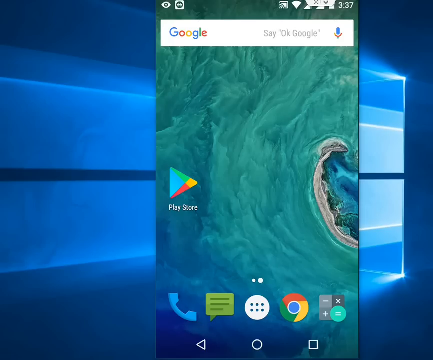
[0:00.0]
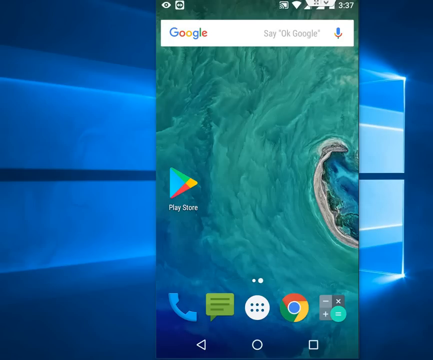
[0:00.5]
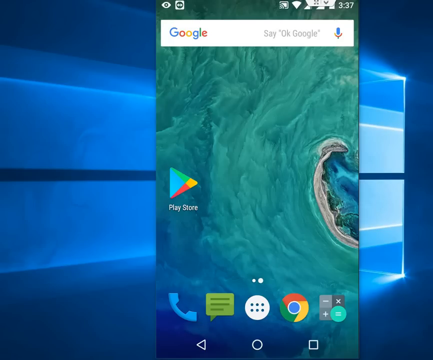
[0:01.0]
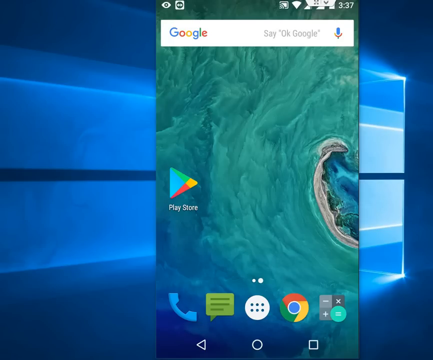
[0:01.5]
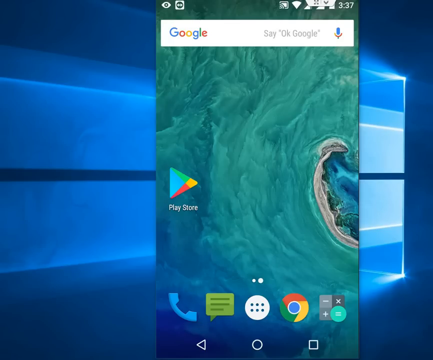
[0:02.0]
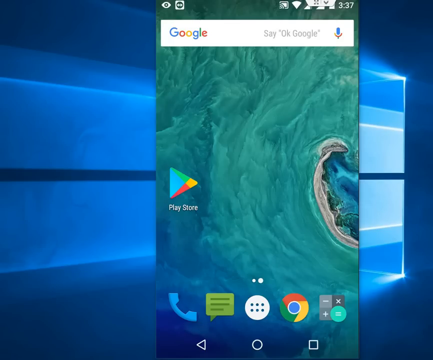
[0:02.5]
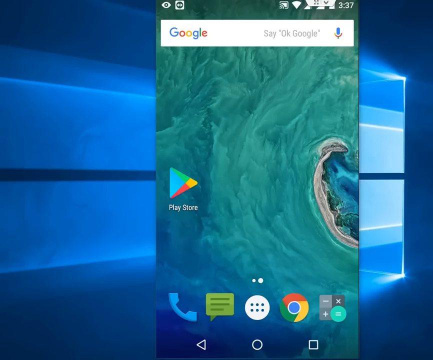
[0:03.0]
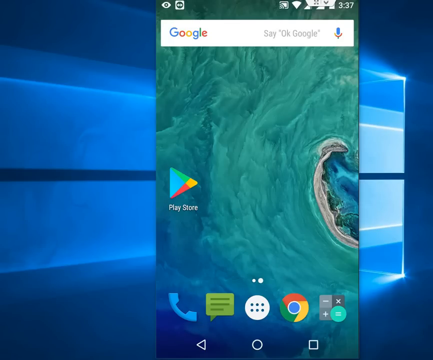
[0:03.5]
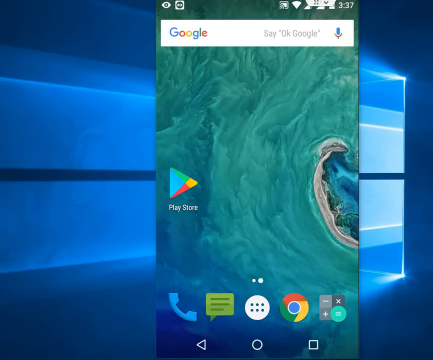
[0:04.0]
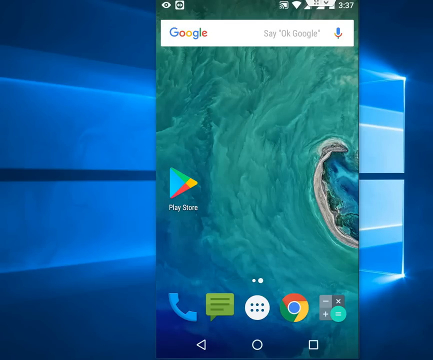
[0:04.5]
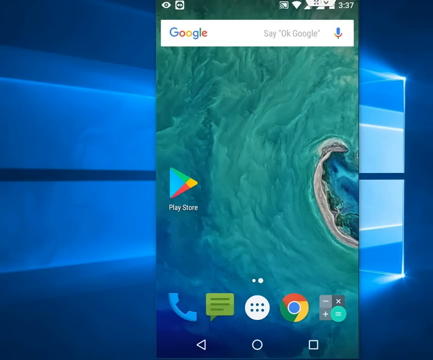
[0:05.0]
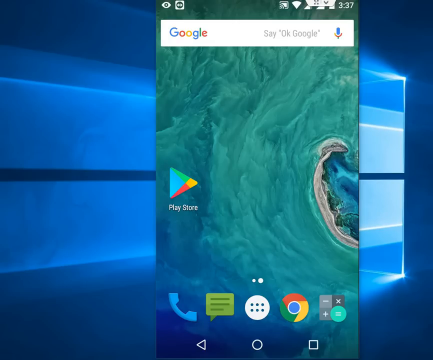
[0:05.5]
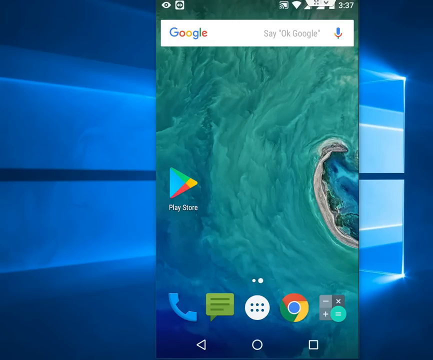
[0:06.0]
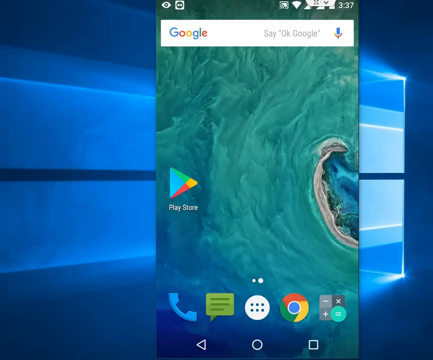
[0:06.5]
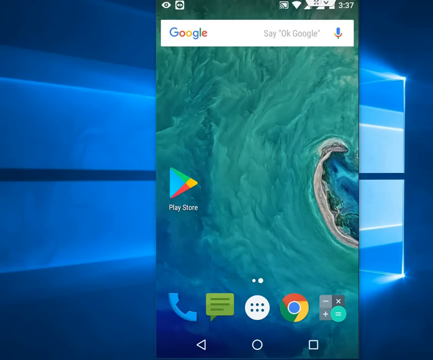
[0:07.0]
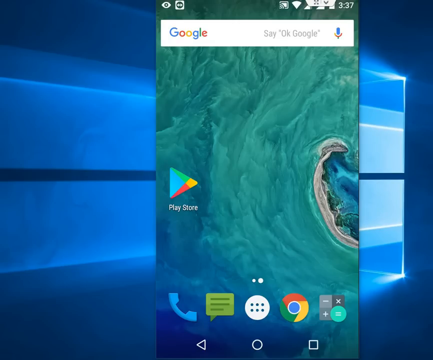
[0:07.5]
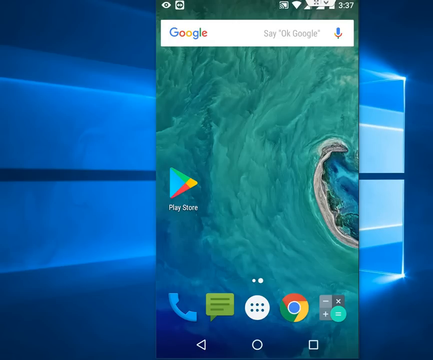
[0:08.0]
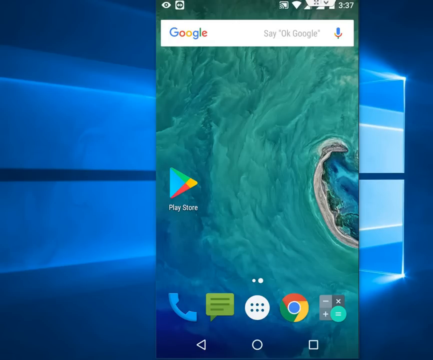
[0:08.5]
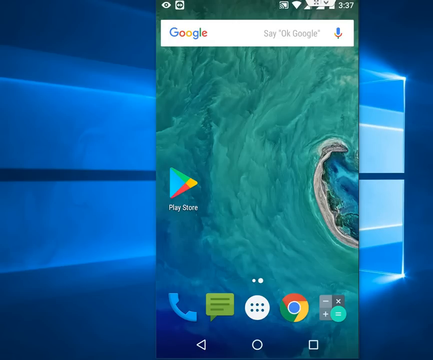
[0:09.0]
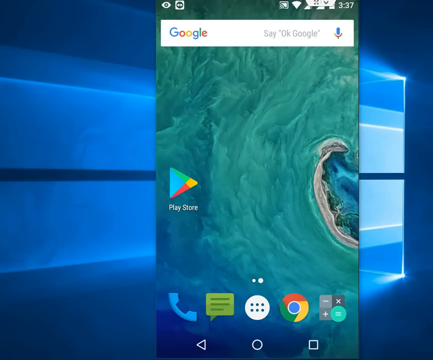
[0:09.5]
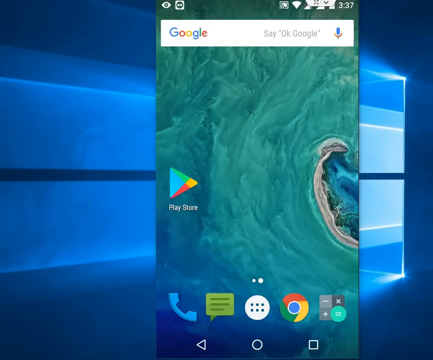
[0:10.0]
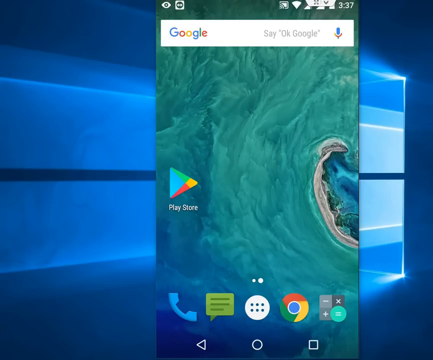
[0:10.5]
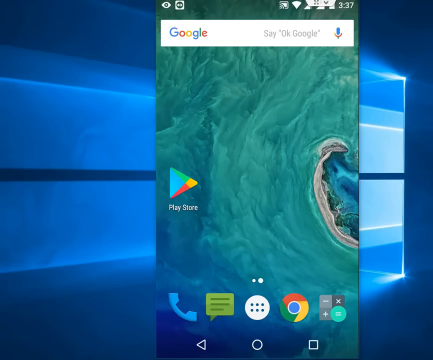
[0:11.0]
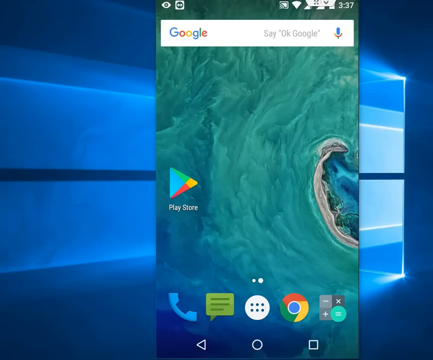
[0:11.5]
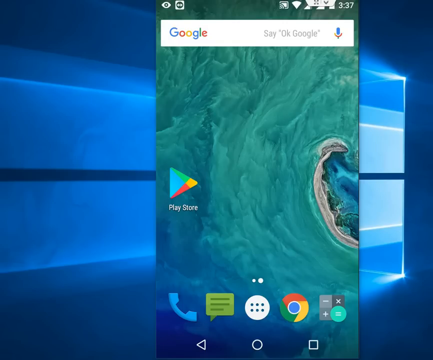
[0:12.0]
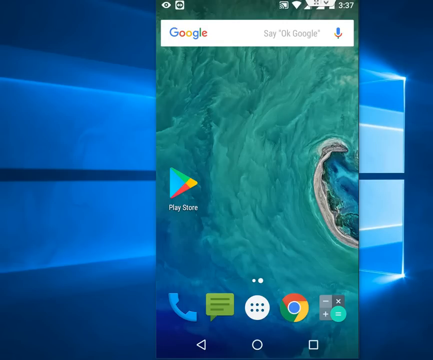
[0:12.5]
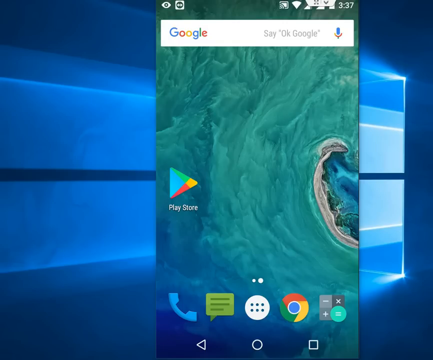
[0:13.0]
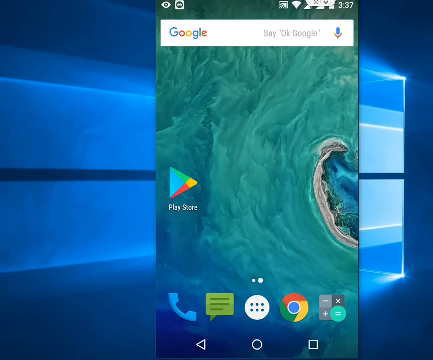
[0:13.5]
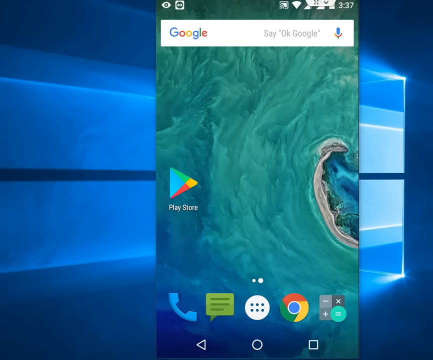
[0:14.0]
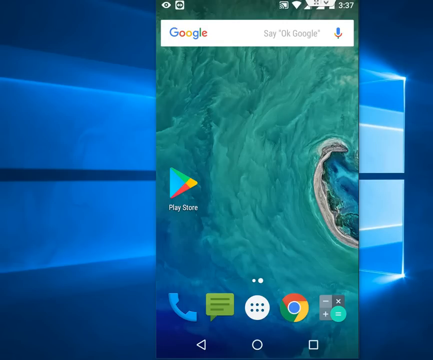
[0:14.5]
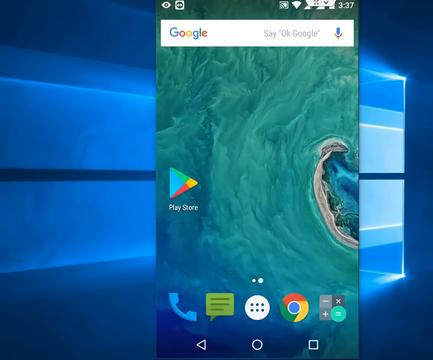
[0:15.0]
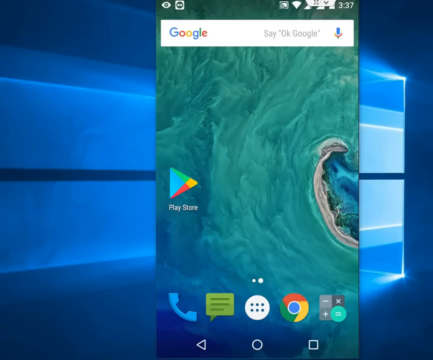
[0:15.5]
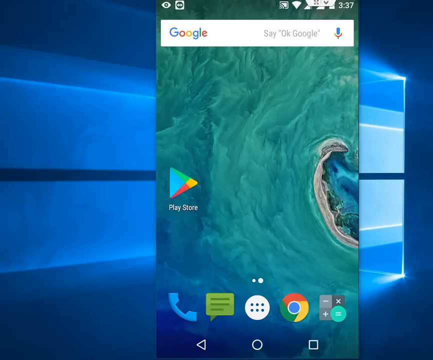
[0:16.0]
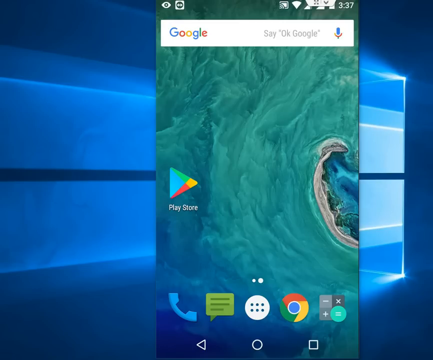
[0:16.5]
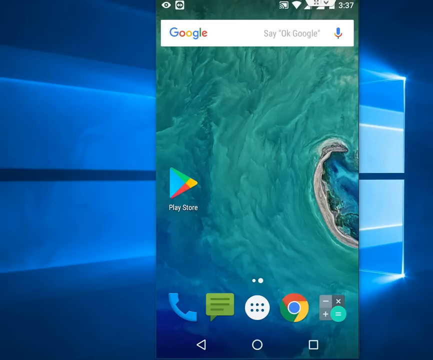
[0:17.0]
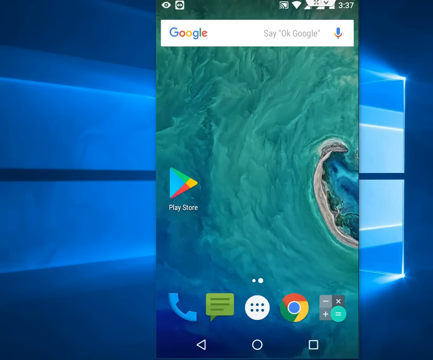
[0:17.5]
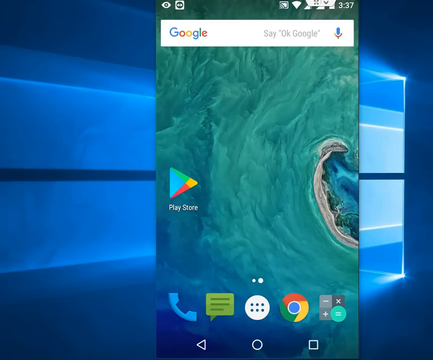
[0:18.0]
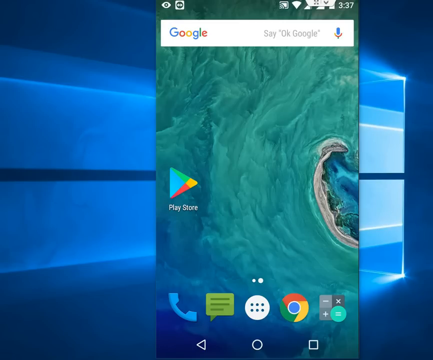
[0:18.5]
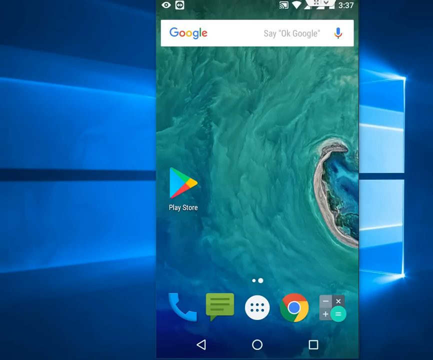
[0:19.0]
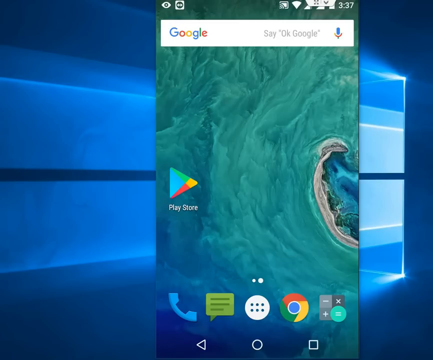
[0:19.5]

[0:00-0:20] A screen with a blue background is shown, which appears to be the Windows background, though it is hard to tell. The right-hand side of the screen is dark blue, and there is a very light blue area with light coming out of its top and bottom, which kind of looks like a corridor. The light shines from the right side of the screen to the left, making two blue lines that run all the way across the screen. In the middle of the screen, the typical multicolored Google logo is at the top, with "say okay Google" and a microphone. Below that is what looks like someone's phone front screen, which is green. A Play Store icon is on the middle left, and on the lower left there are a blue phone icon, a yellow text icon, an unidentified white circle with six dots, a Google Chrome link, and an icon with plus, minus, multiply and equals signs, apparently a calculator.